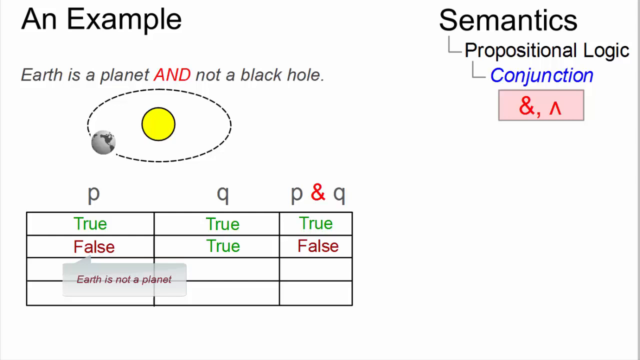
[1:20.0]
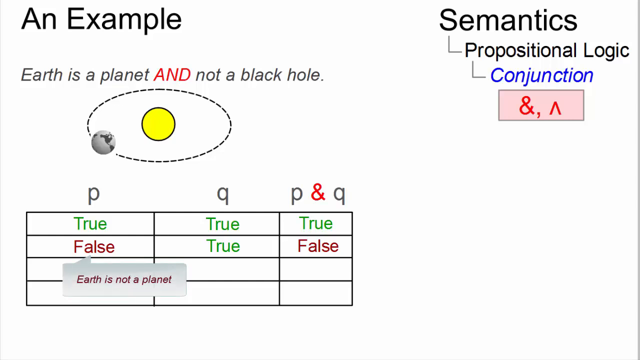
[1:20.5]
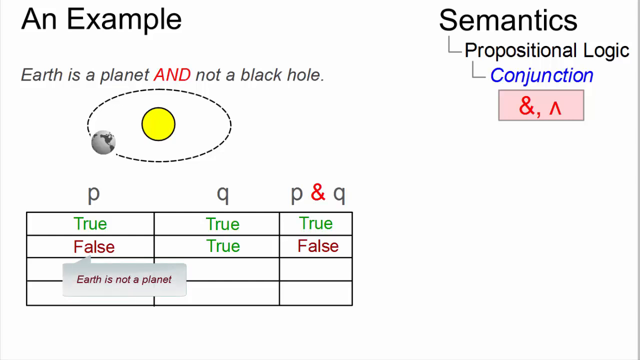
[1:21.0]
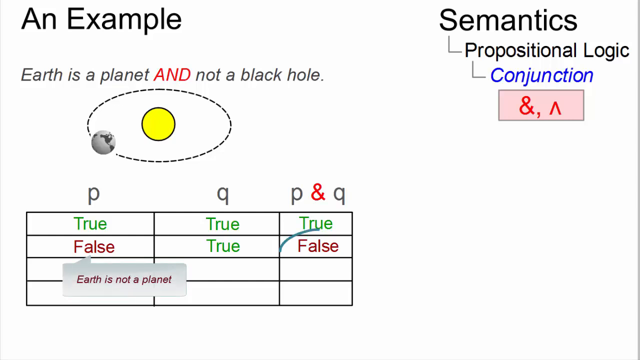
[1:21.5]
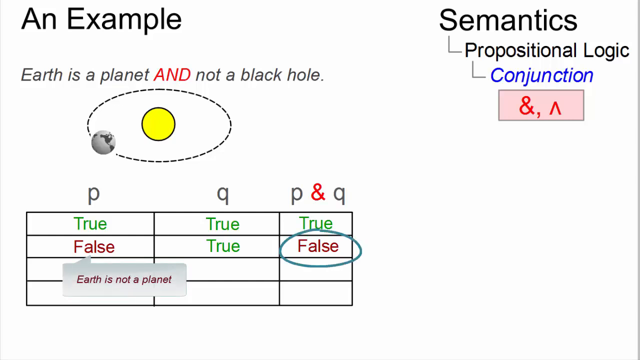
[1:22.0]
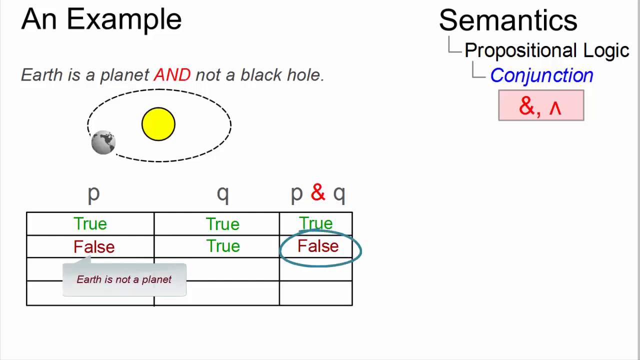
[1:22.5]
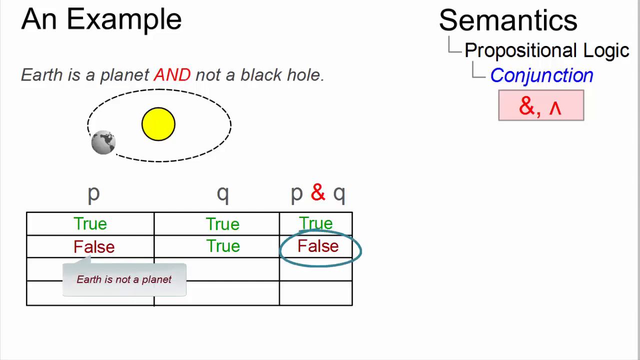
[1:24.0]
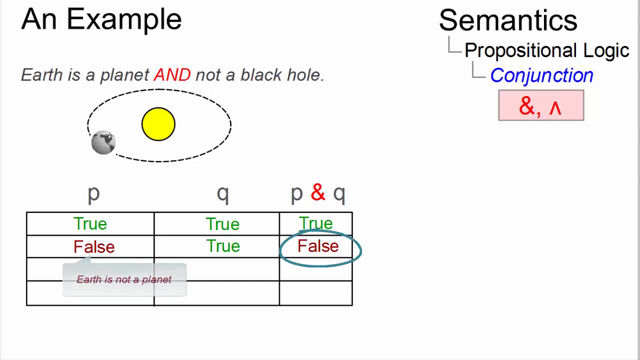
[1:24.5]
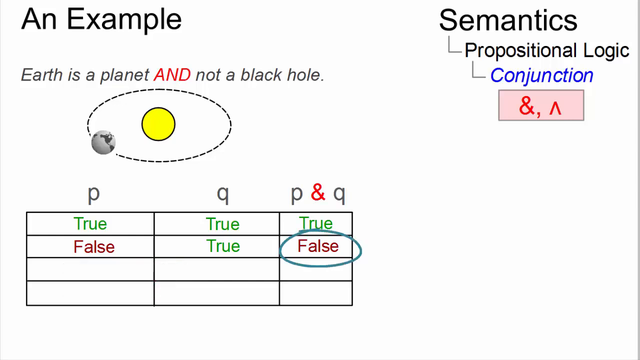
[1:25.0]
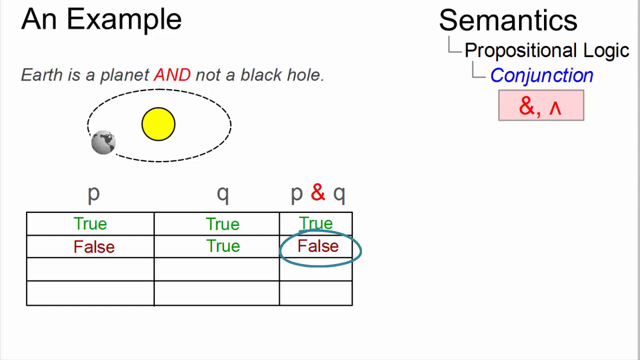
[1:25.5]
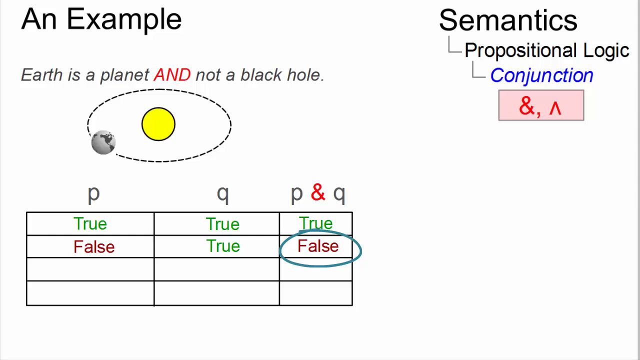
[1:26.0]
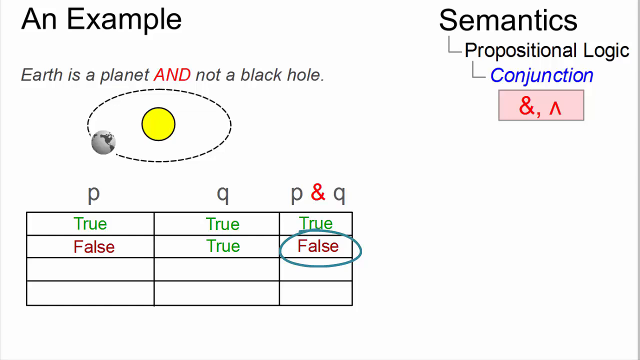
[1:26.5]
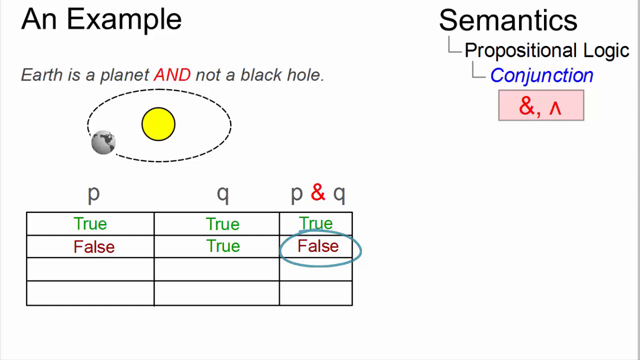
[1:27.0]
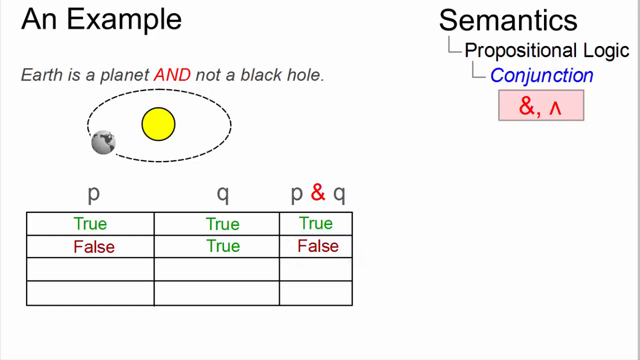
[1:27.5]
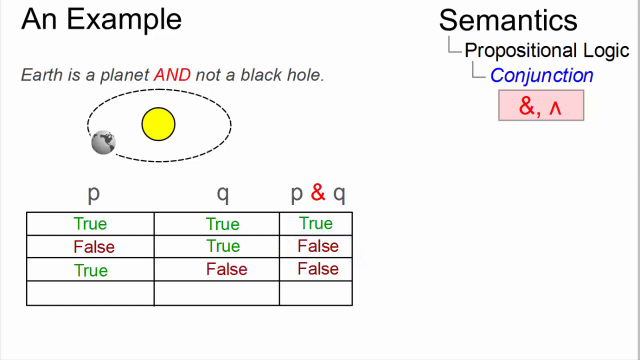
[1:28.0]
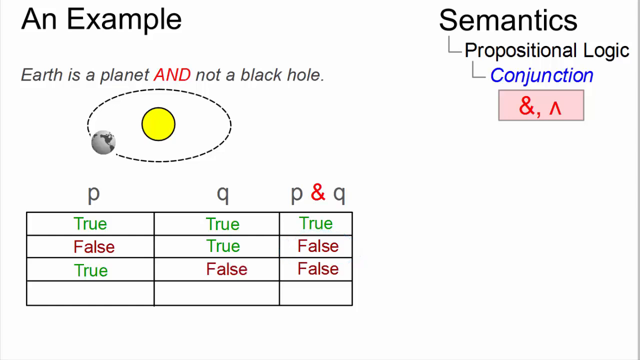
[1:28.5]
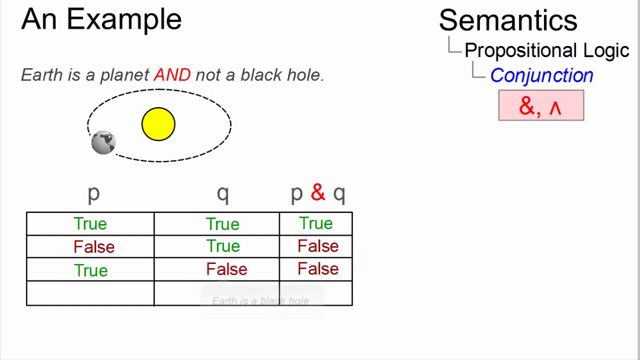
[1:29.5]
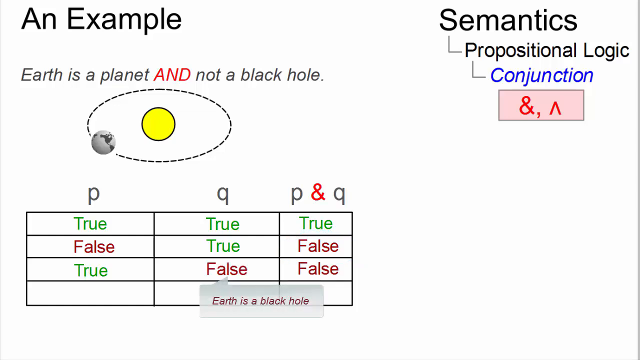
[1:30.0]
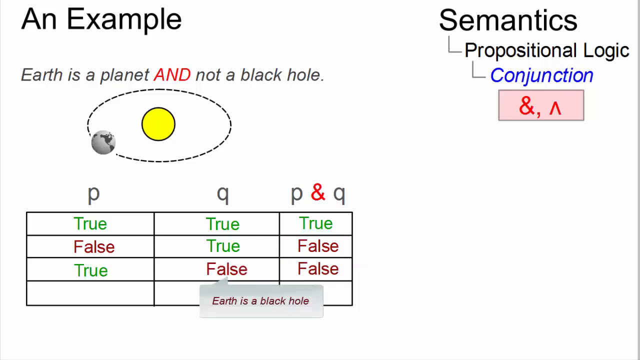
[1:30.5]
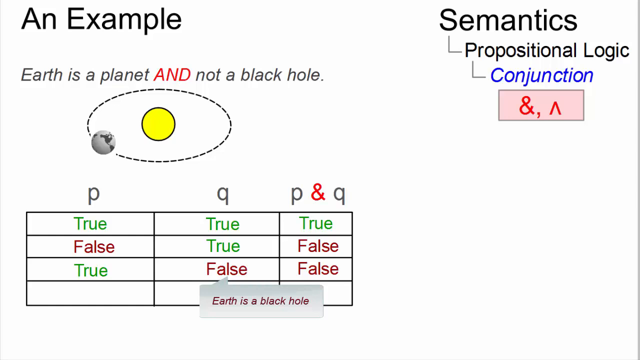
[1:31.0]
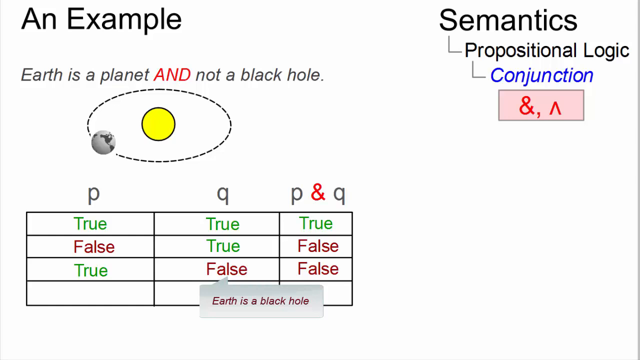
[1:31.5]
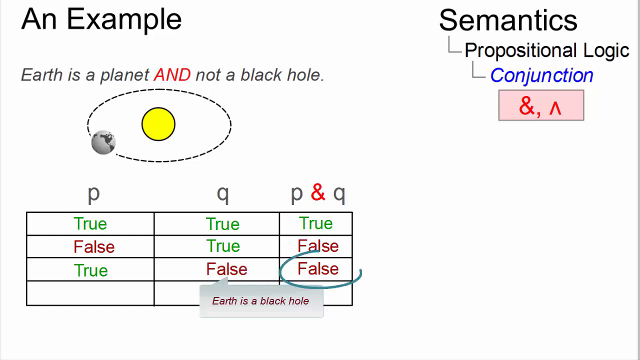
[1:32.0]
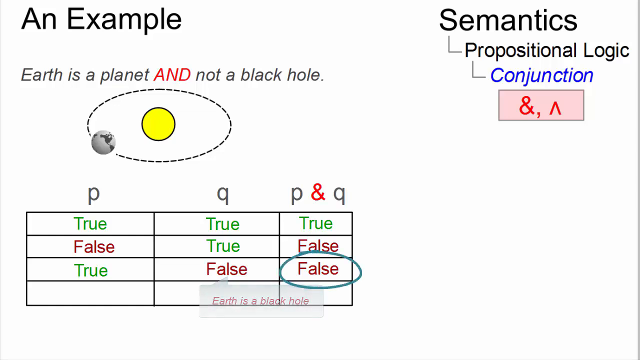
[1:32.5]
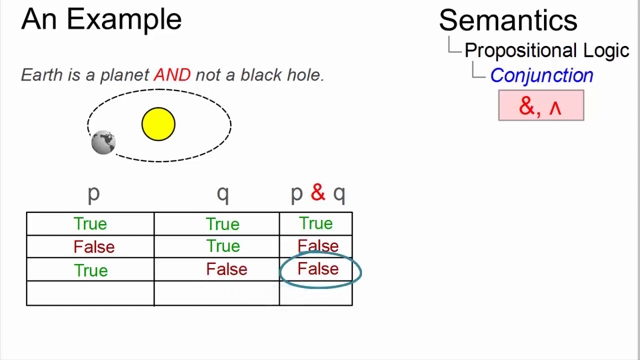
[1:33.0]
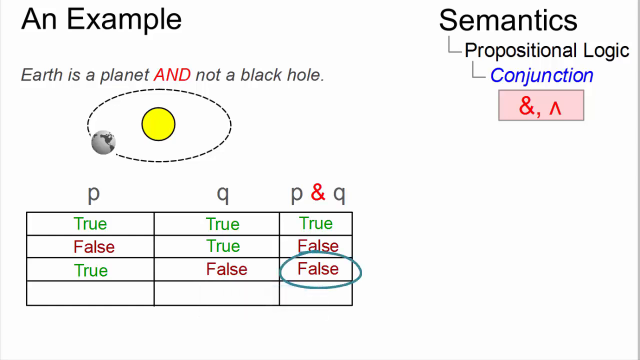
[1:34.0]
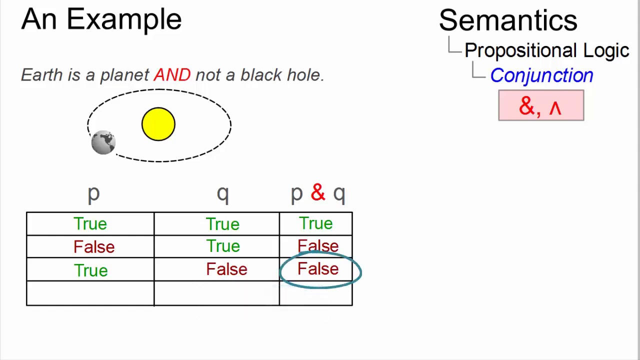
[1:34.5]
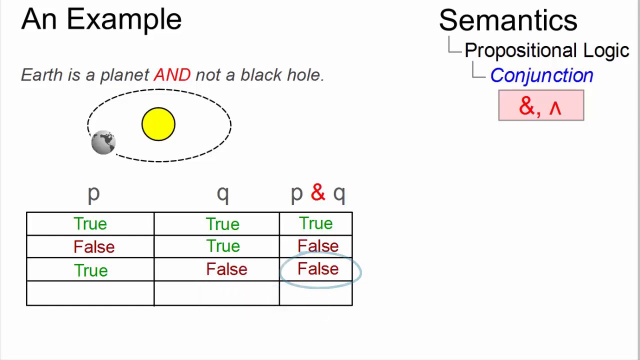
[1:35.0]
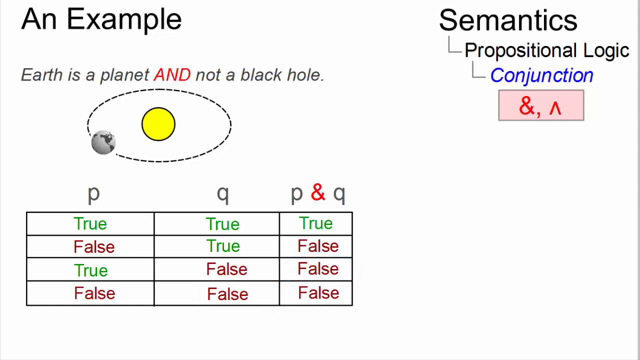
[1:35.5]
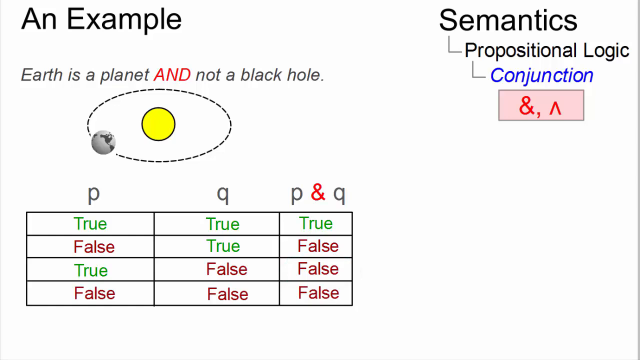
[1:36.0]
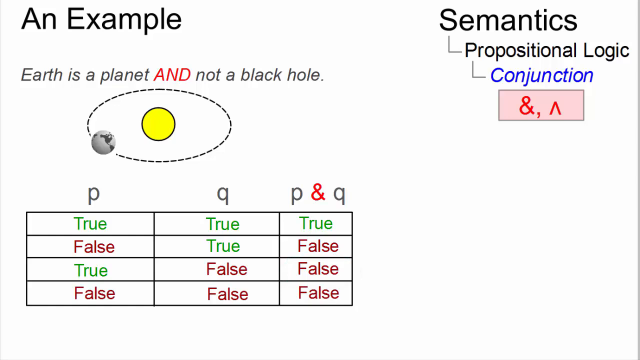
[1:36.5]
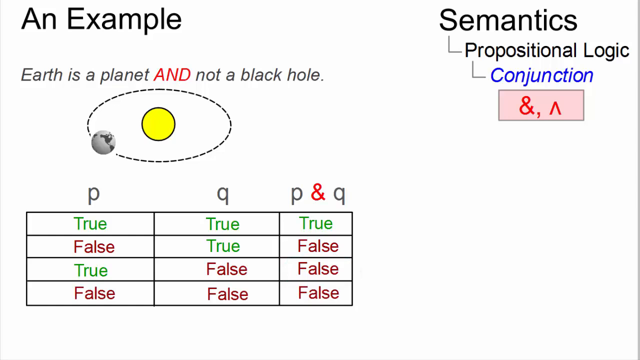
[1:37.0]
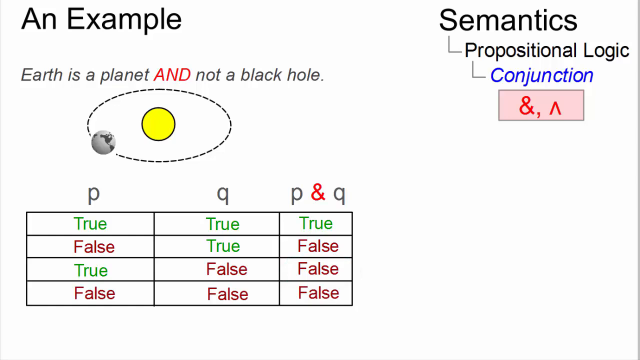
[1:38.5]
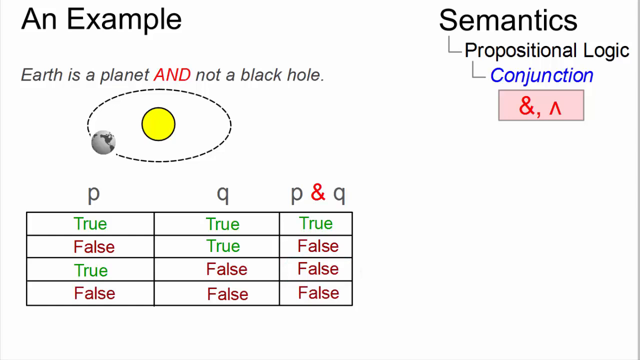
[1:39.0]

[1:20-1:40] The white background fades from black at the bottom to gray about an inch up and then into white. A rectangular box has three columns. The first column is P: under it is a green true, then a red false, with the text "Earth is not a planet" popping up under the false. Under Q is a green true and another green true. Under P and Q, the first line is true, the second false and the third false. In the middle column, the third line says "Earth is a black hole", indicated as false. The red false in the third line of the third column is circled in a bluish-green oval. On the fourth line, all three columns show a red false.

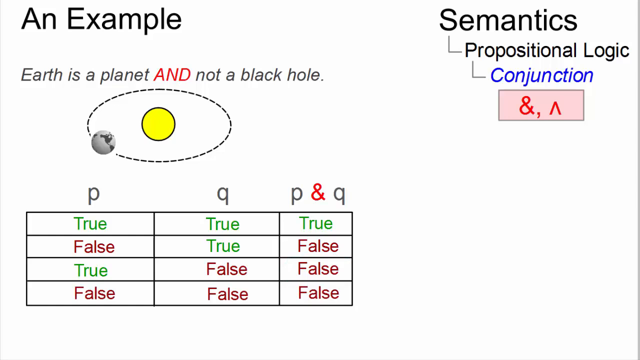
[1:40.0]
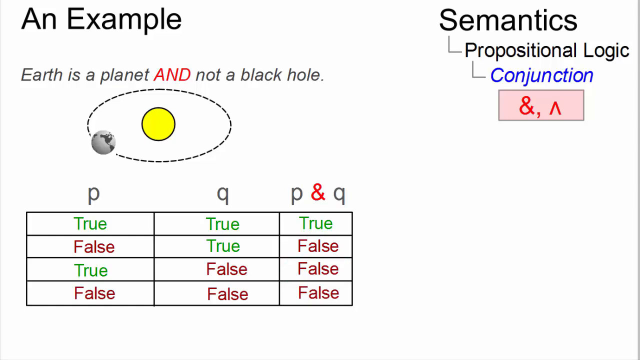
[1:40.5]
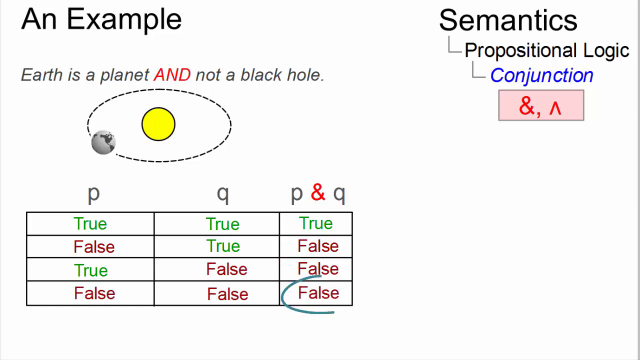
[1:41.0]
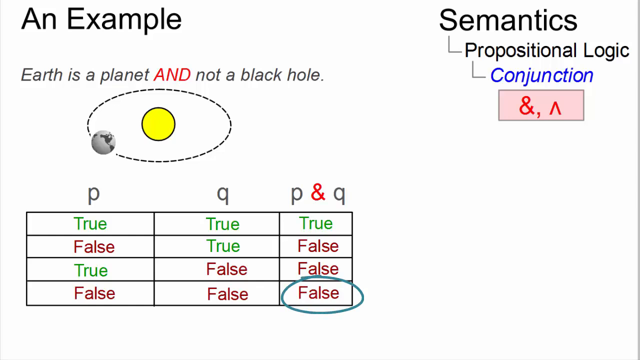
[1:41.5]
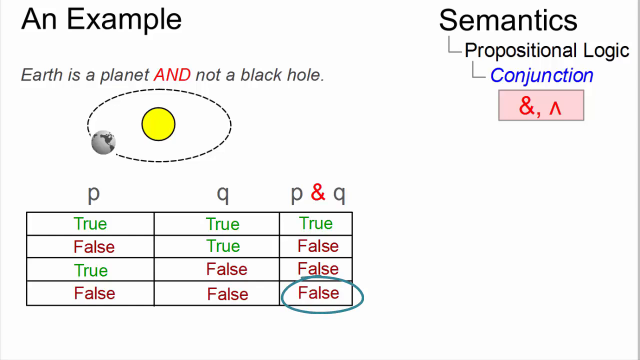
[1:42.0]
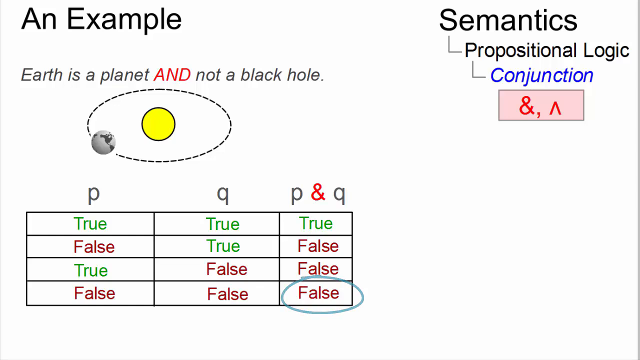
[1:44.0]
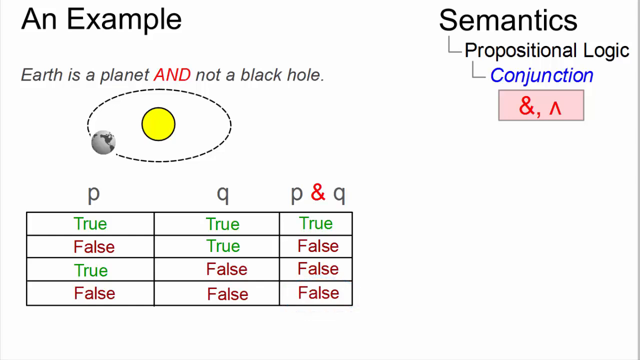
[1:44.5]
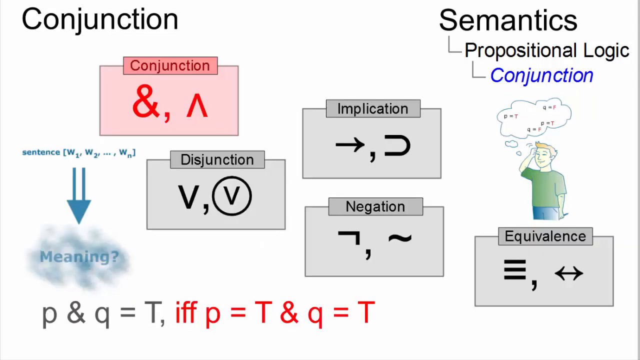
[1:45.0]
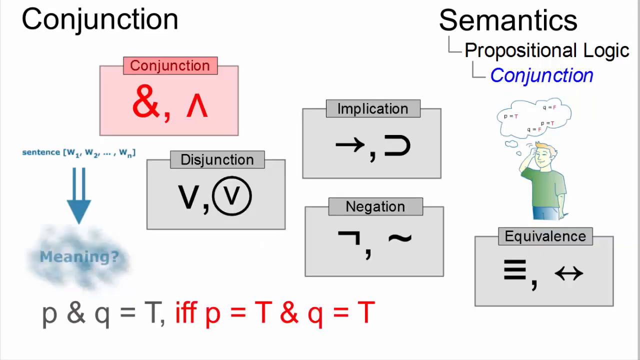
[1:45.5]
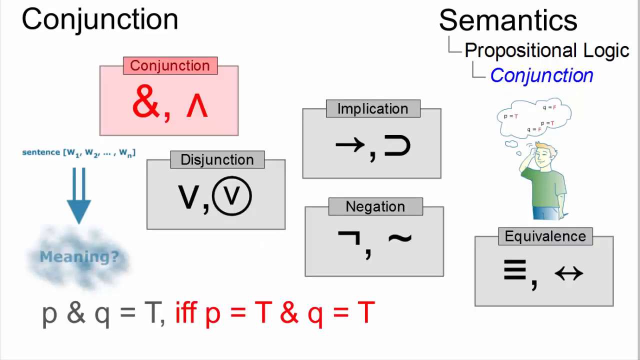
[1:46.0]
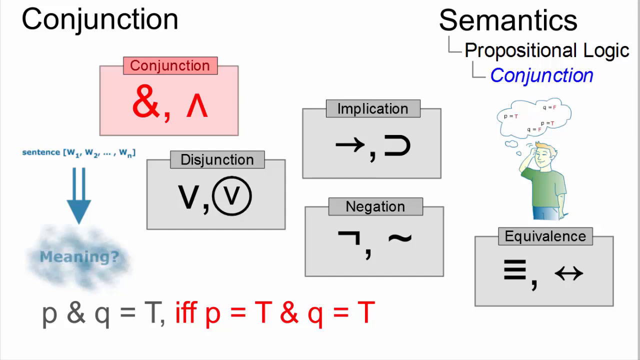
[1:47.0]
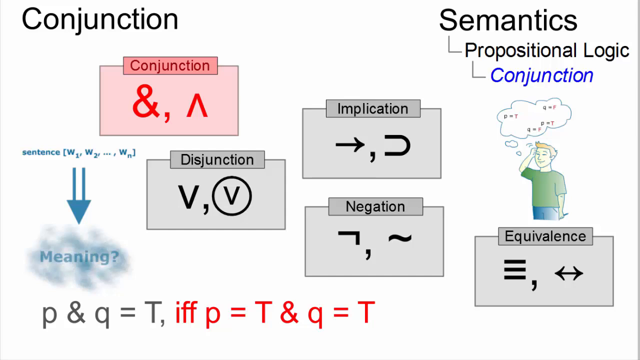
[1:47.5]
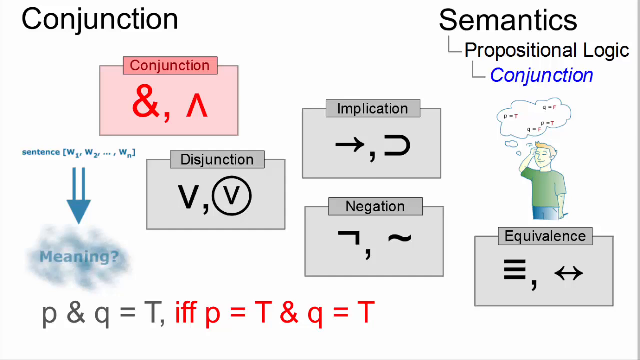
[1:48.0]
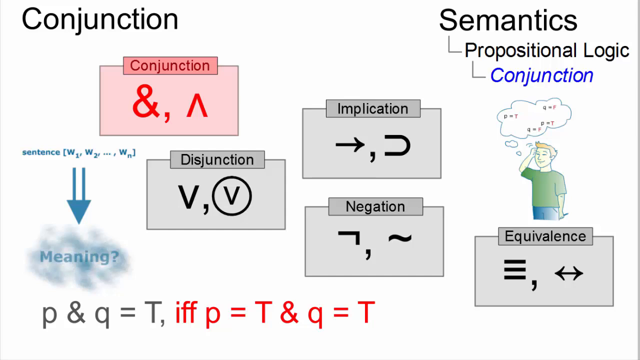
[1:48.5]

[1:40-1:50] The word false on the bottom fourth line is circled in red. The video moves to the next slide, which pops in from the bottom right up toward the top and slightly flips. At the top left, "conjunction" is in a pink box with a bluer box at the top, and below it are a capital symbol, a comma and an upside-down V. On the left side is a sentence. Two lines go down in a triangle shape, pointing to the word "and" with a question mark about its meaning, shown in blue with a faded blue spotted area behind it. To the right of the arrow is the word "disjunction" with a symbol V, a comma and another V, with a black circle; further right are the words implication, negation and equivalence.